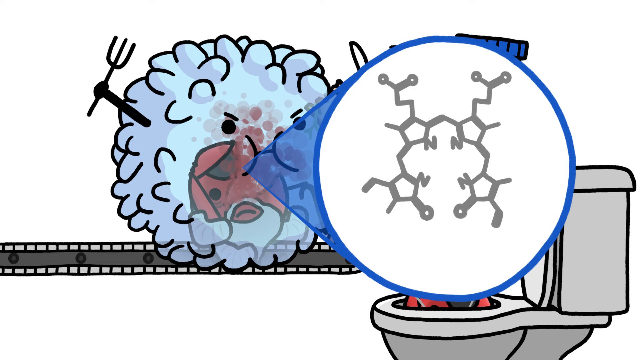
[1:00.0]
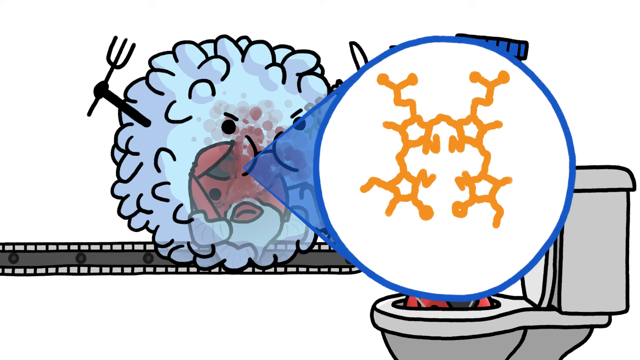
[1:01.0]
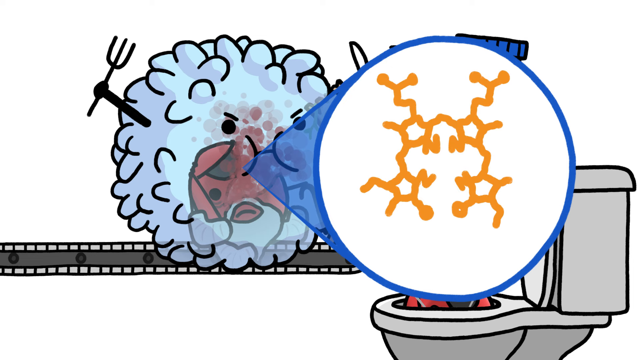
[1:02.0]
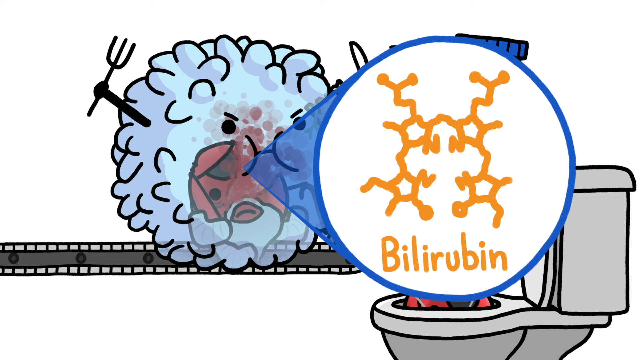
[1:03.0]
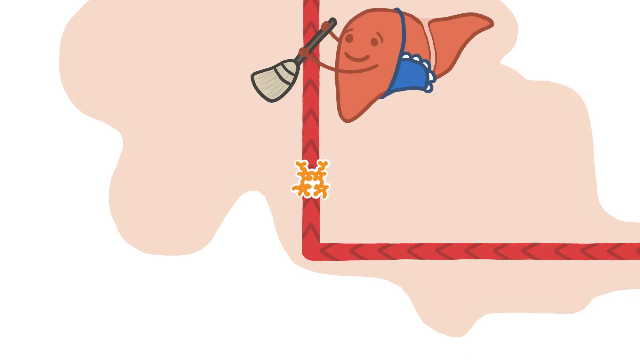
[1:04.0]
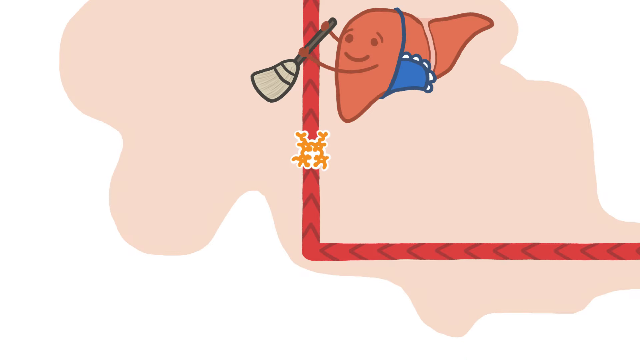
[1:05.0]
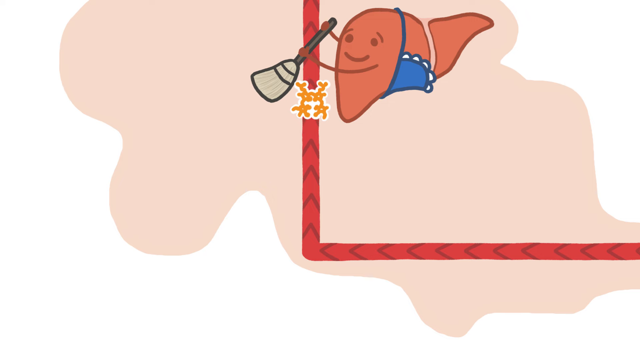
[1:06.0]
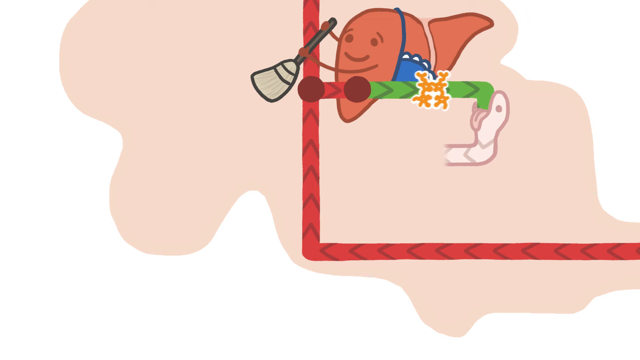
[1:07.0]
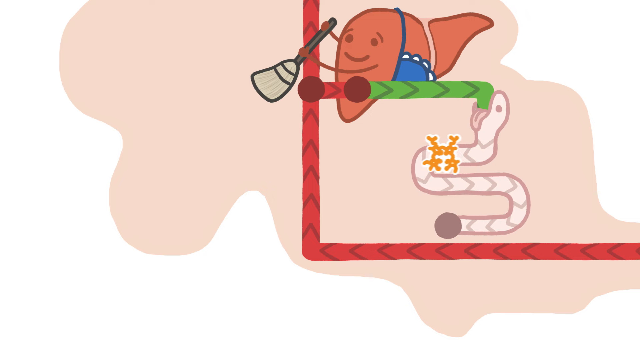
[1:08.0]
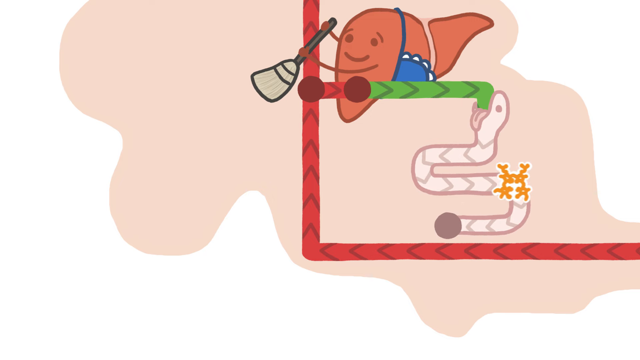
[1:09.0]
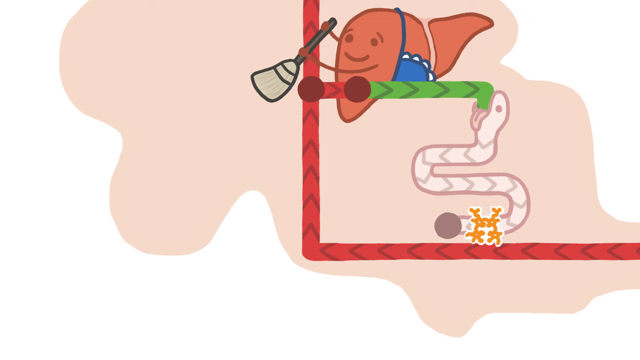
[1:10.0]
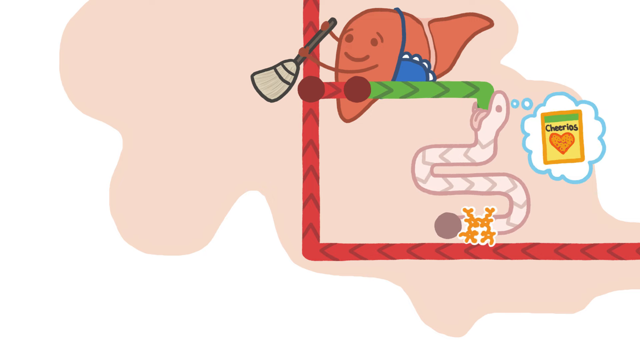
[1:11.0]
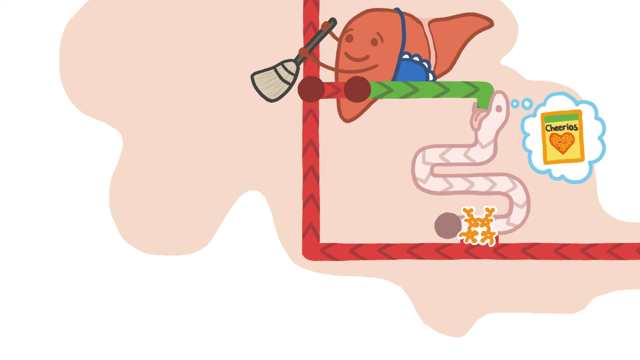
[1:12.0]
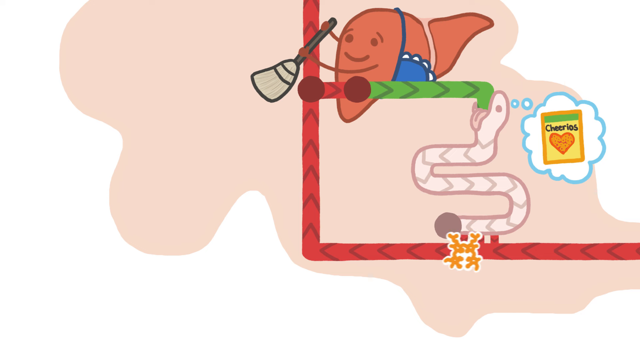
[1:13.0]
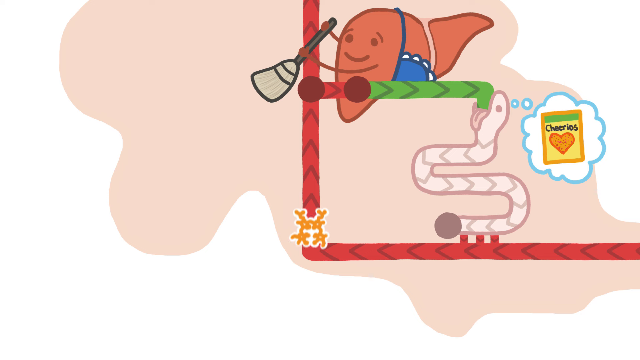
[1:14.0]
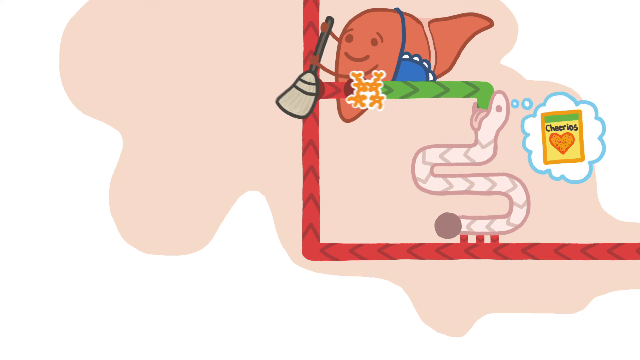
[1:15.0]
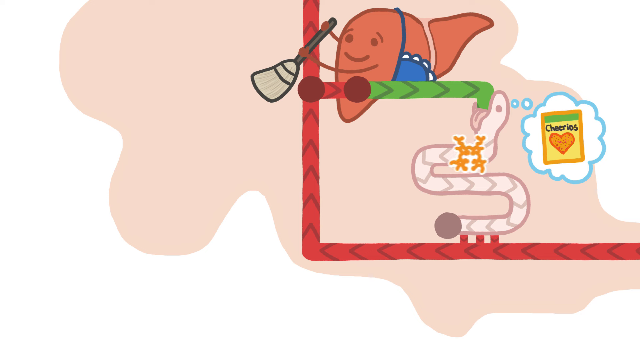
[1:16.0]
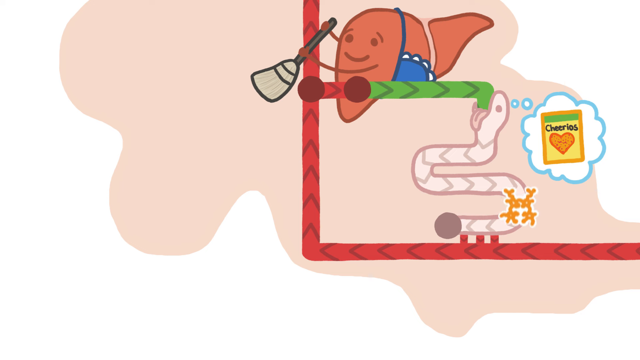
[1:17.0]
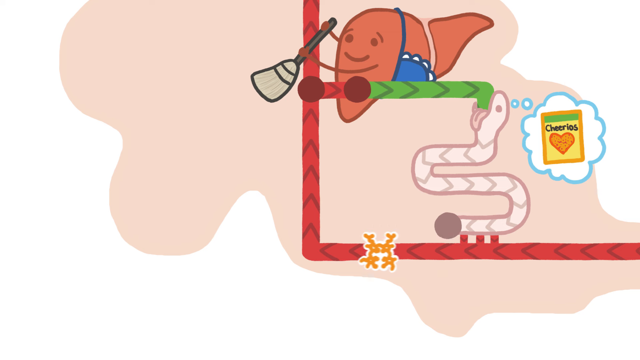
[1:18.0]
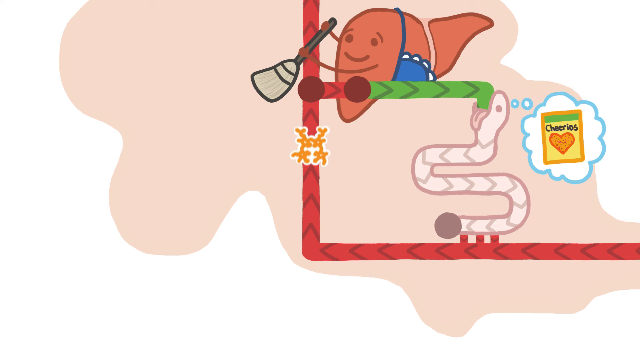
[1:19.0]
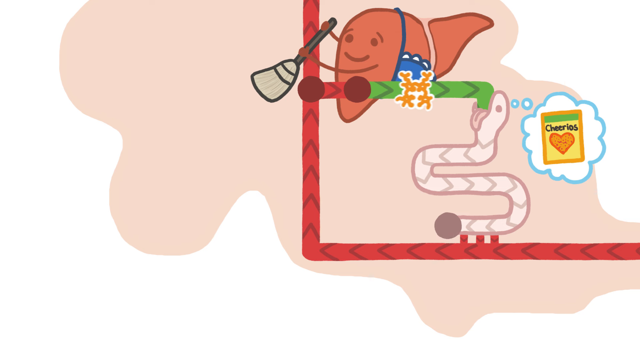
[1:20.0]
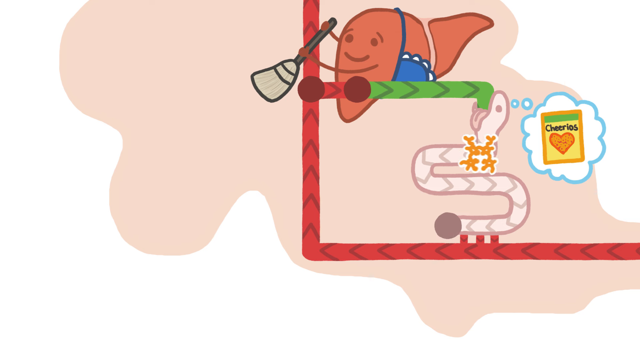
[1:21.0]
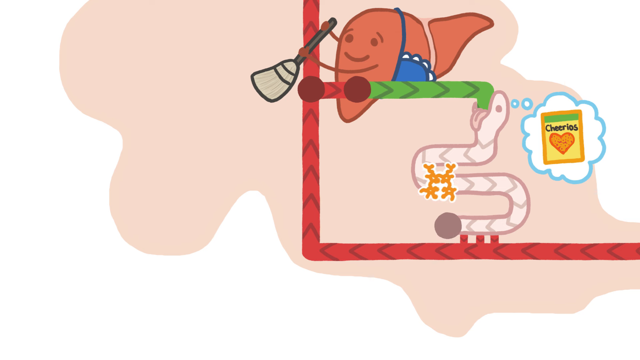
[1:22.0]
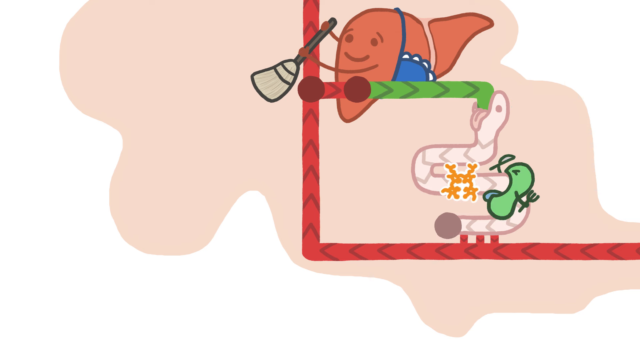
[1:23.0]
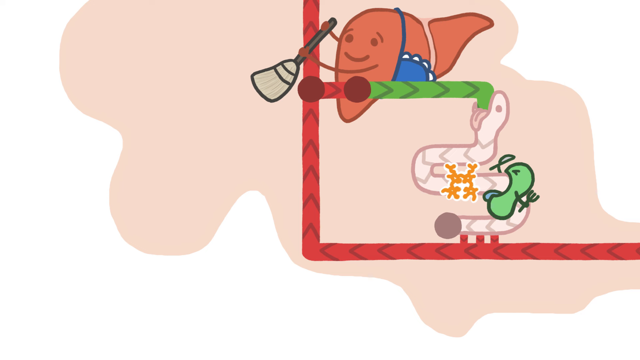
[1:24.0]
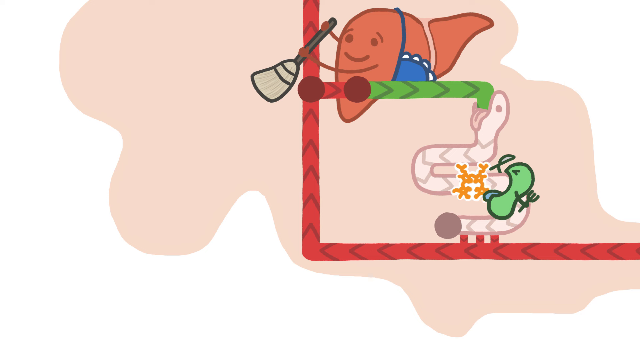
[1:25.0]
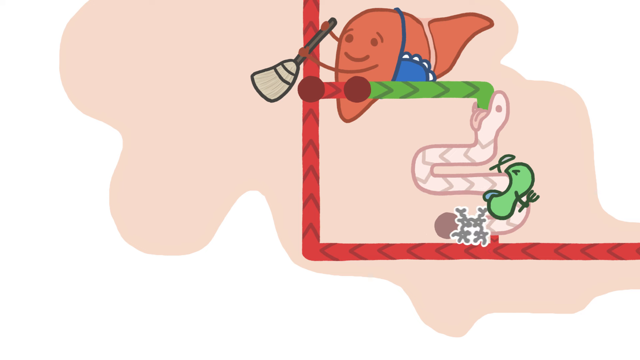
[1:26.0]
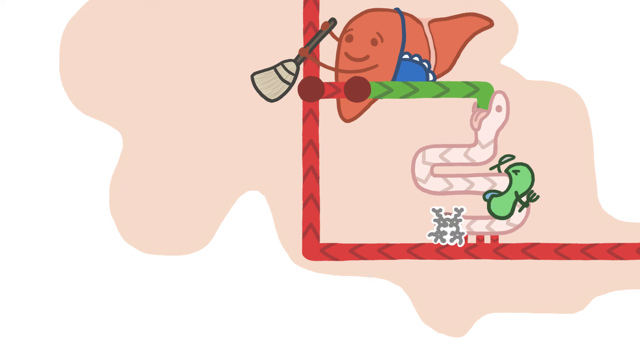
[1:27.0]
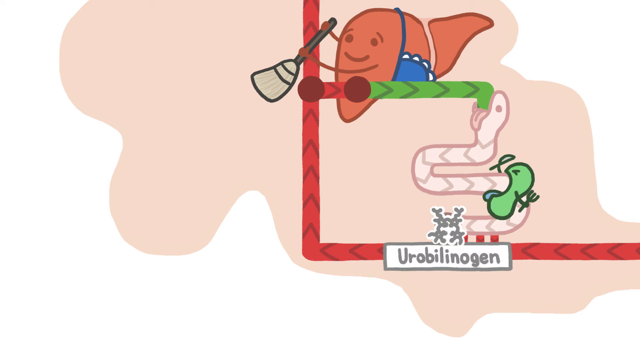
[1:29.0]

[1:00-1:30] A circle comes out of the mouth of the molecule that has just eaten the berry, showing what looks to be a DNA symbol, and underneath it now says "Bilirubin". The video cuts to a different screen with a red corner with lines, and something with a broom in its hand and an apron on, which seems to be cleaning up. The DNA signs go up the red line towards the broom, and the broom knocks one to the right. The line turns green as it heads towards a white snake; the symbol goes down the snake's mouth, through the body, and rests on the tail. The snake starts to imagine a box of Cheerios. The symbol comes out of the snake, gets back onto the red line, goes left and heads up the red line towards the broom, and the process repeats, going round in a circle where it keeps getting swept back into the mouth of the snake thinking of Cheerios. Eventually something green appears in the snake; it has its mouth wide open and holds a knife and fork, as if it wants to eat the DNA coming towards it. The DNA passes through it and comes out grey, and underneath it says "Eurobilinogen".